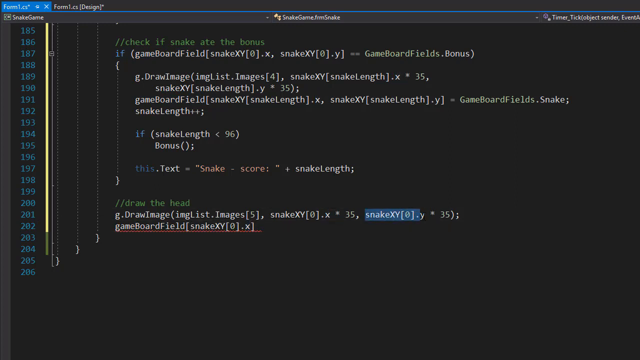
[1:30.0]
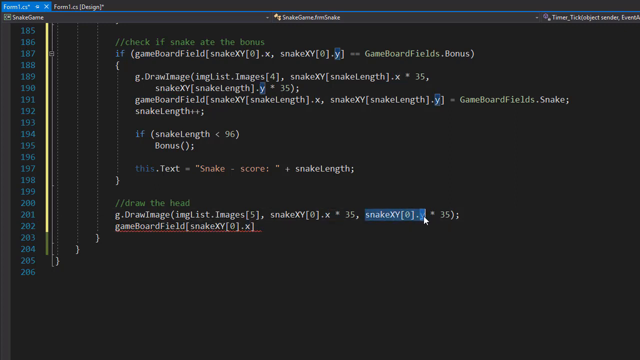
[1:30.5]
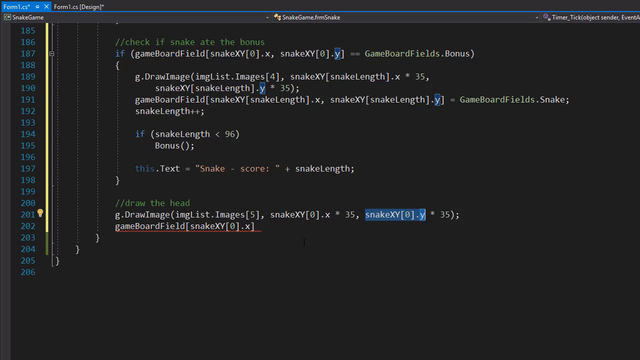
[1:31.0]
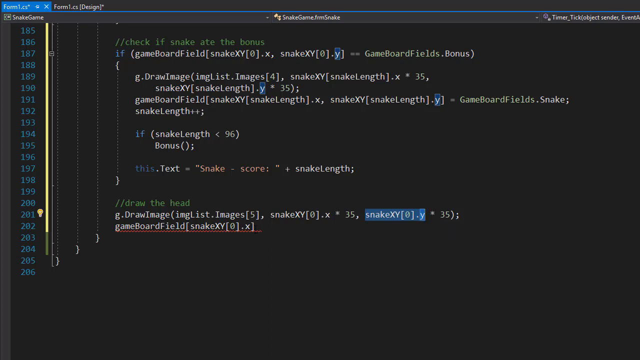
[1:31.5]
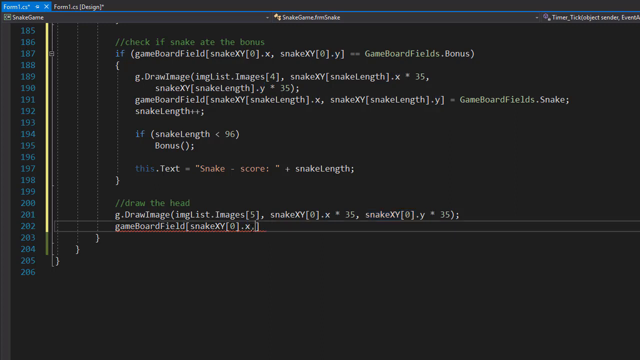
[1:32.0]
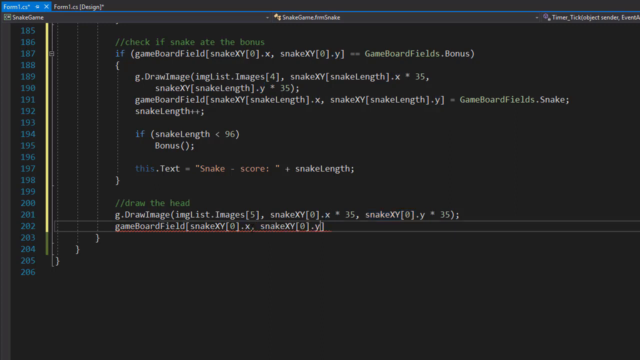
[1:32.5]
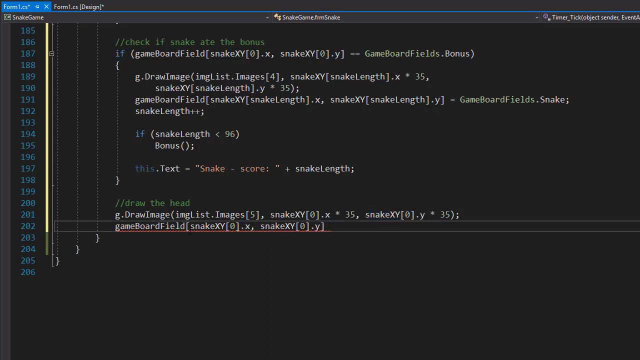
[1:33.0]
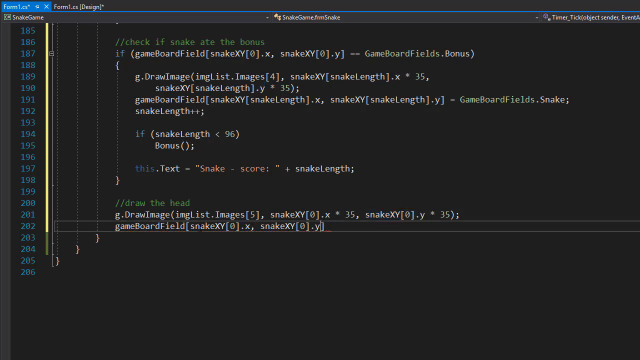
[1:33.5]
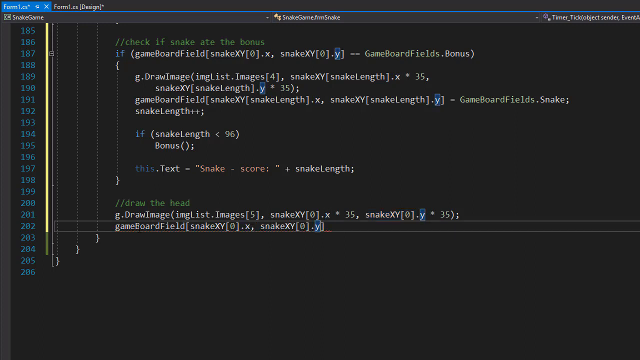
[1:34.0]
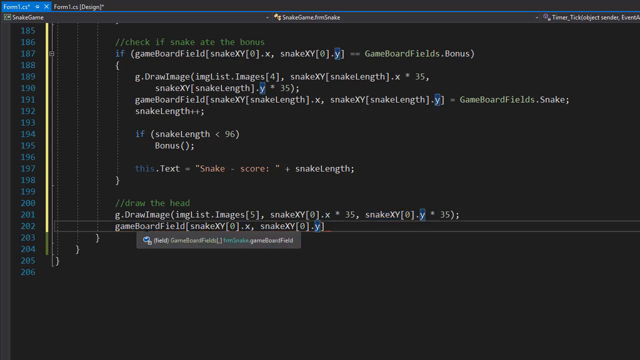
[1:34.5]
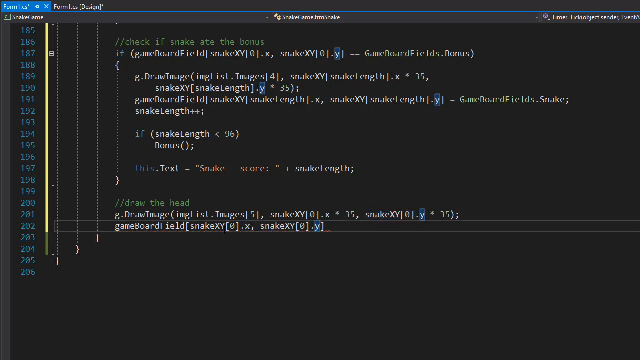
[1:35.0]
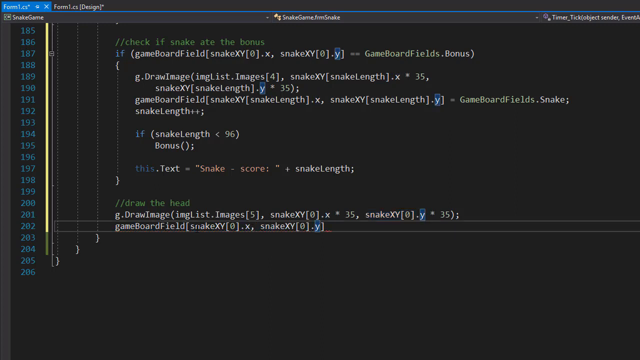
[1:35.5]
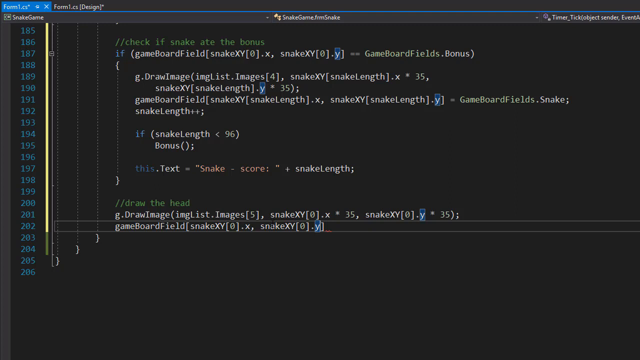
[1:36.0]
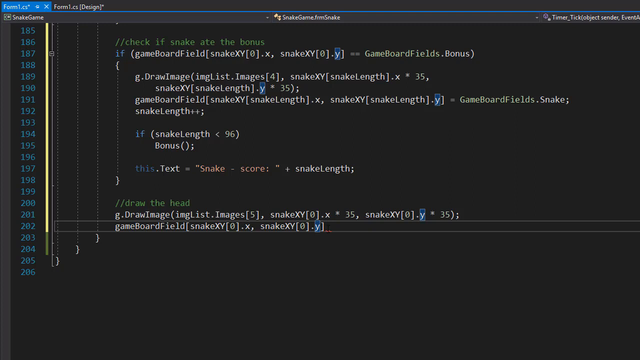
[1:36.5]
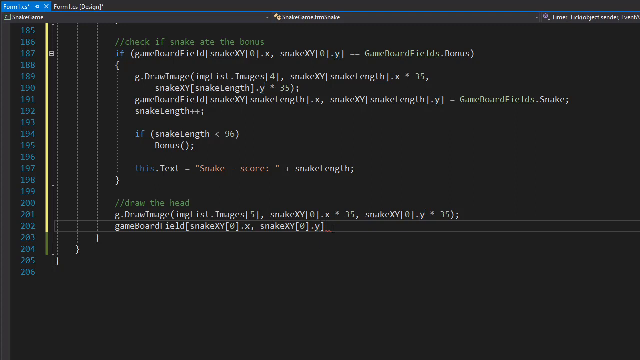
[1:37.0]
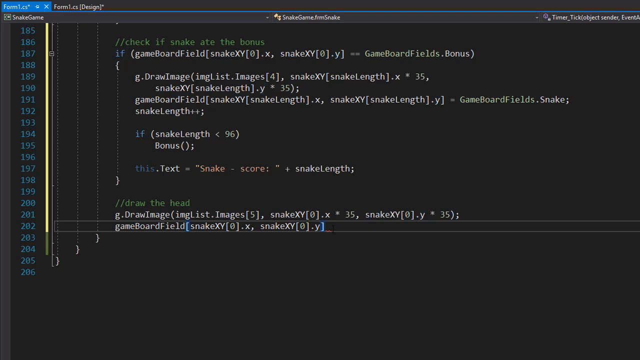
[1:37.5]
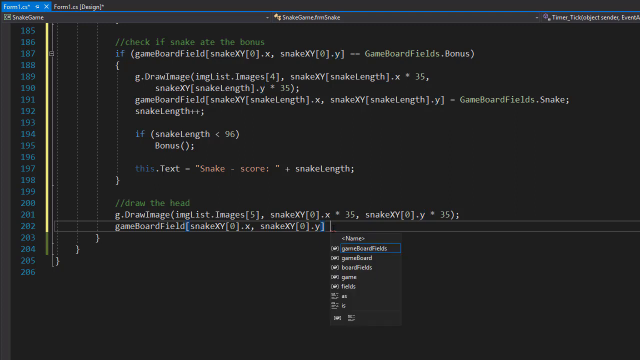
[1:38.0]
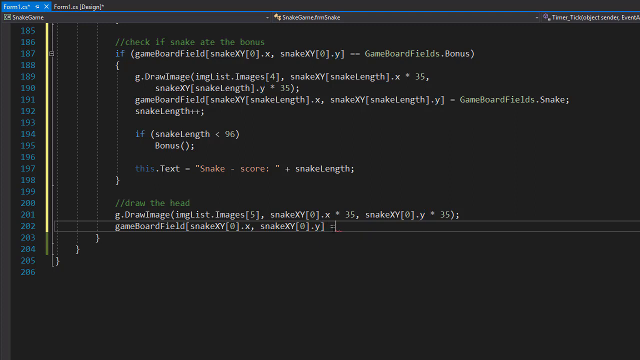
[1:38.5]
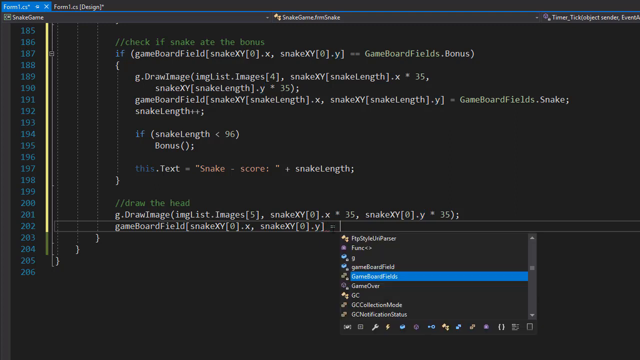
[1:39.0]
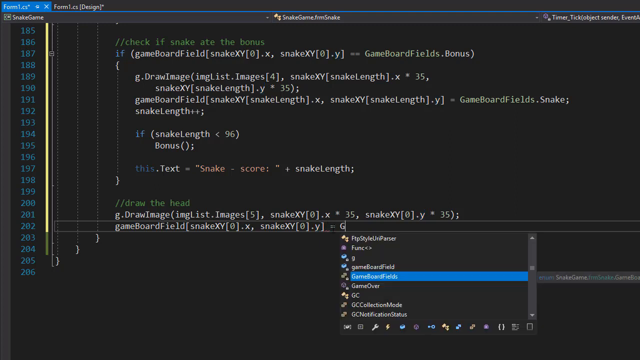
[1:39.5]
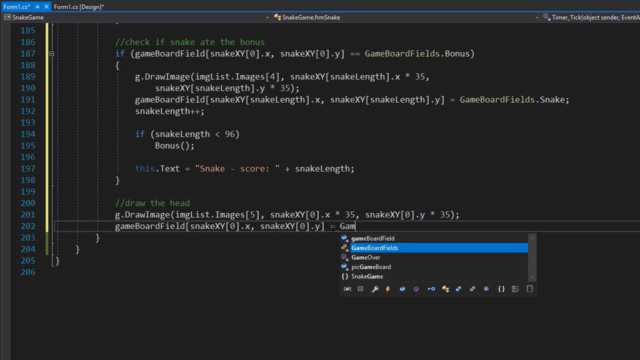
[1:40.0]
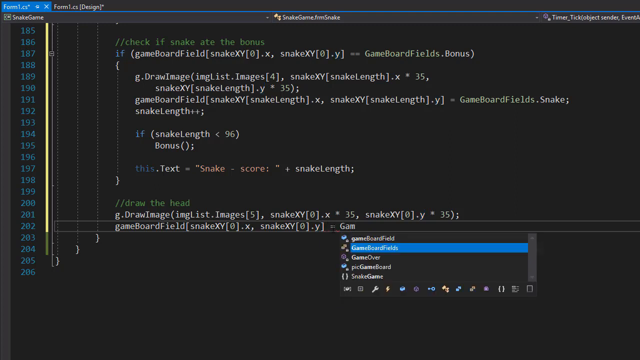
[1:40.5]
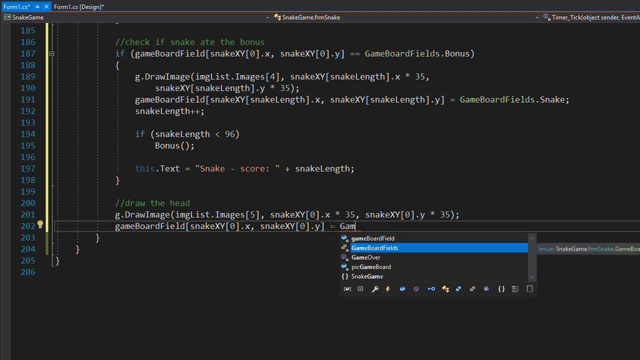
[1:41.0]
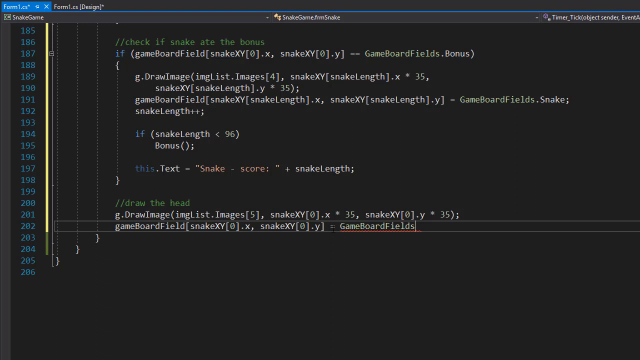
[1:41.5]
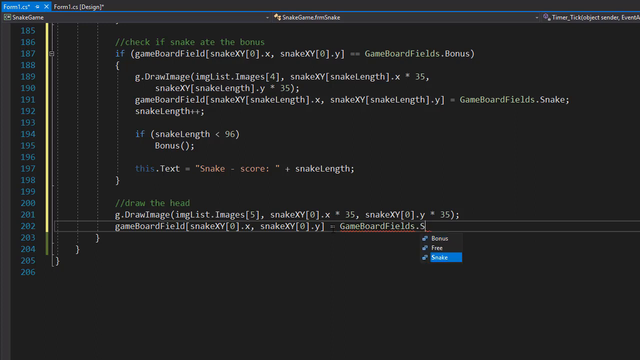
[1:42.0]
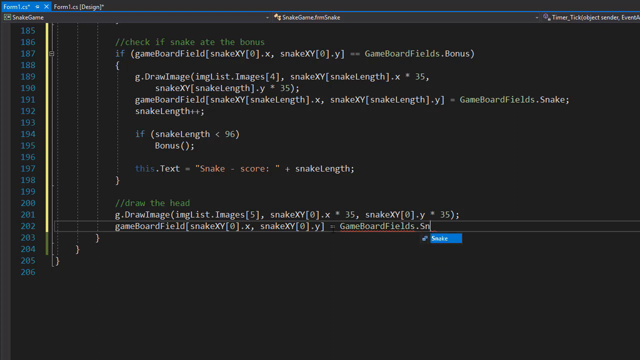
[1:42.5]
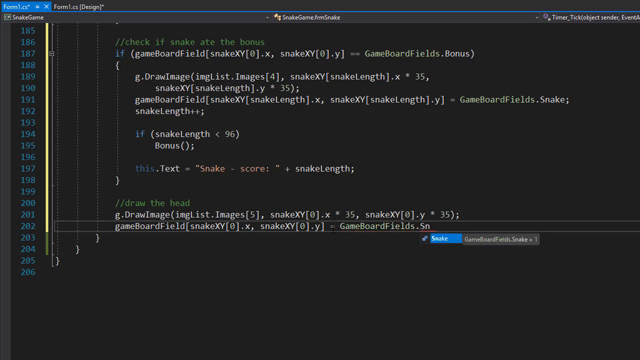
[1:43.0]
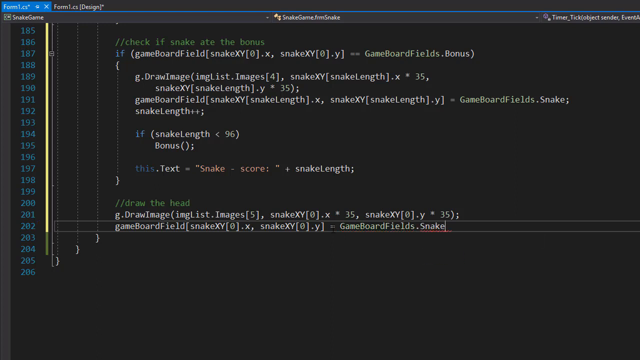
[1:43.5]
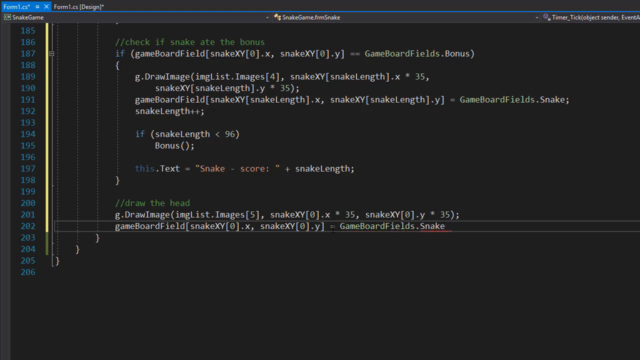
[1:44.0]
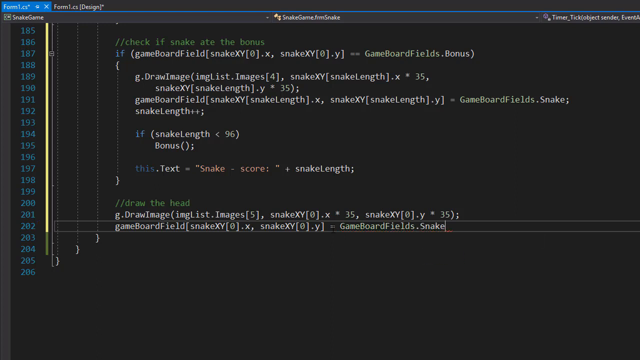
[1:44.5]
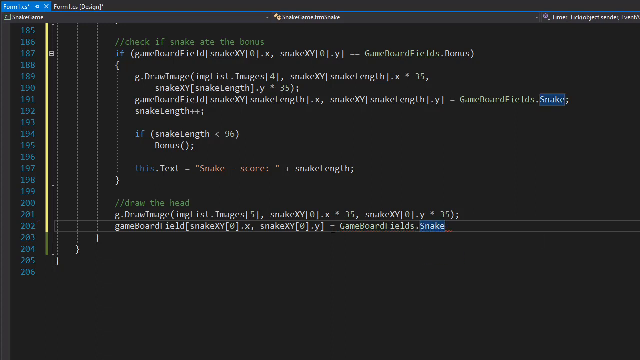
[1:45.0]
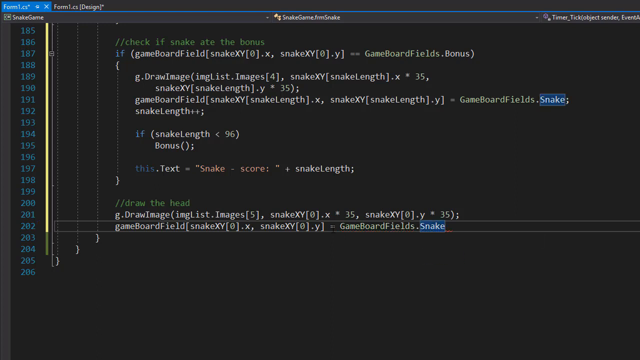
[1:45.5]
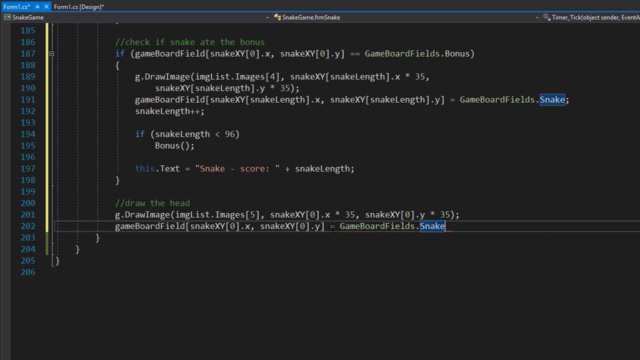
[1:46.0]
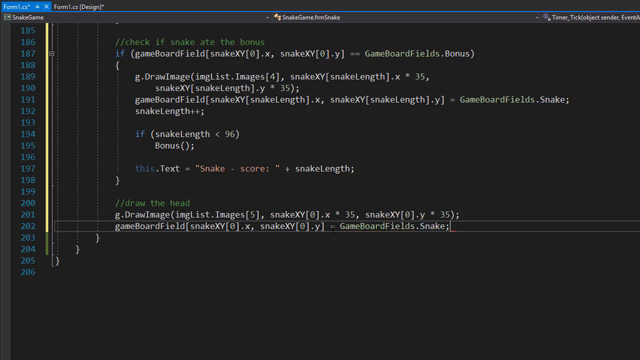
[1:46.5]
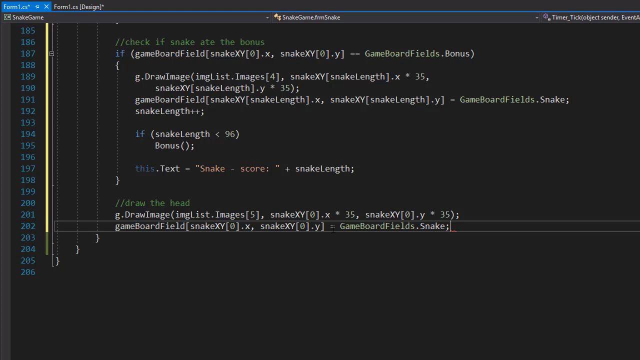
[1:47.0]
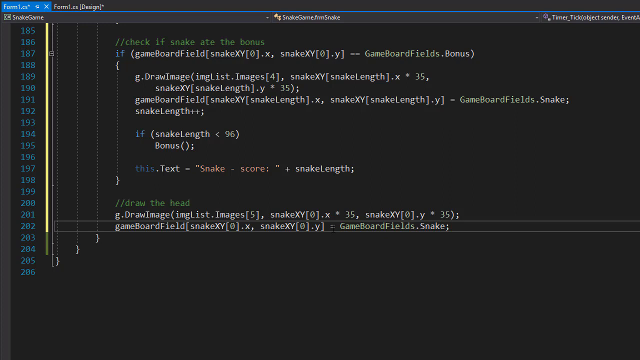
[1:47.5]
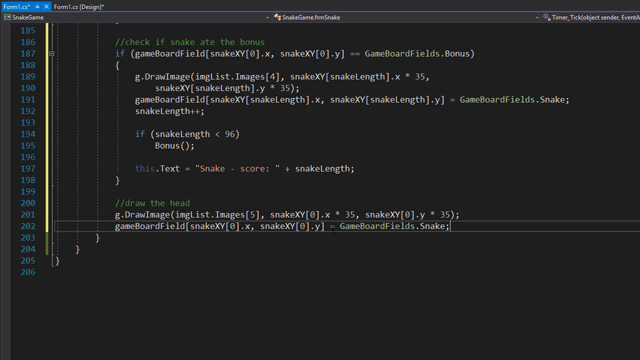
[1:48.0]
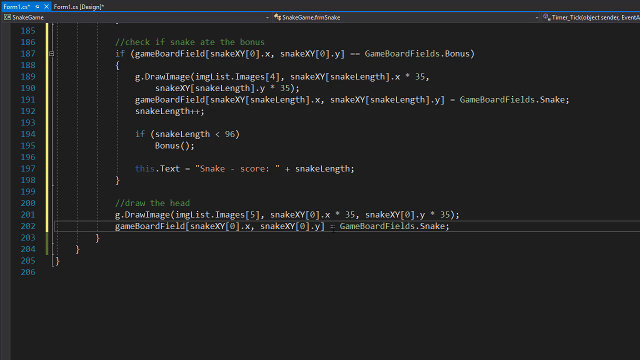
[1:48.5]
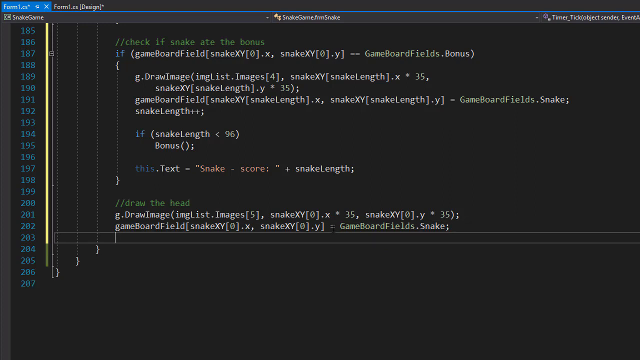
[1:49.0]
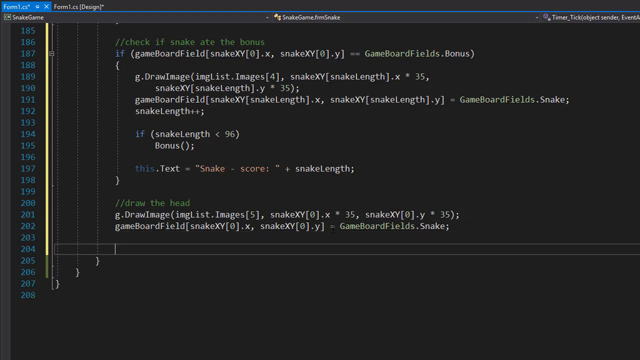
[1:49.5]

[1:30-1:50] The compiler screen, perhaps a program like Brackets, continues as the user enters code, the text appearing from left to right as it is typed. Small menus appear beneath the words as they are highlighted in blue. The text is primarily white with accents of green, blue and a reddish-pink-orange color. The user types quickly, without apparent hesitation, and selects options from the menus beneath the line quickly. When the line is complete, the user presses enter twice, moving the cursor down two lines.